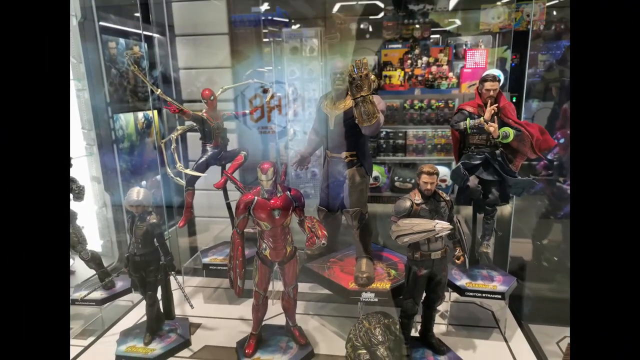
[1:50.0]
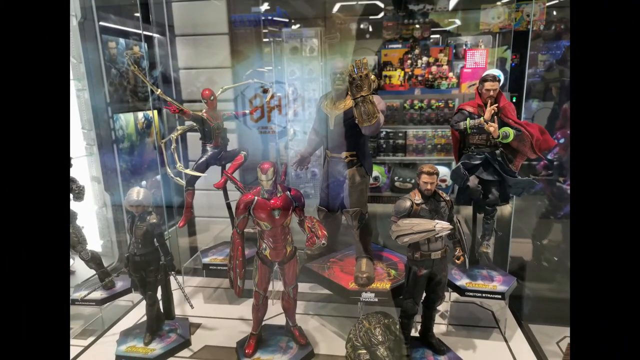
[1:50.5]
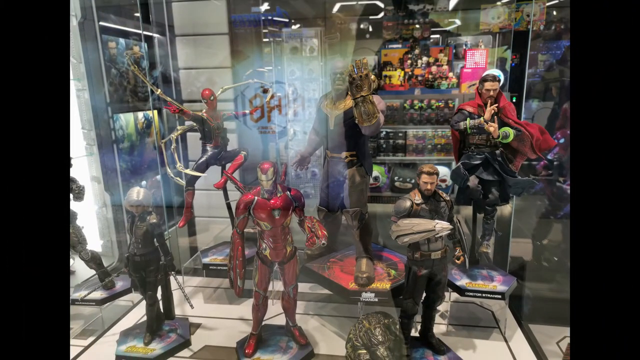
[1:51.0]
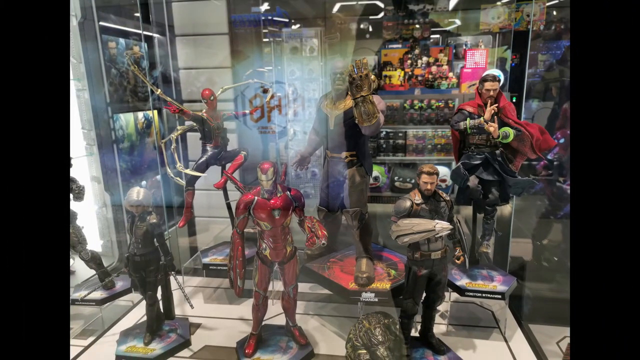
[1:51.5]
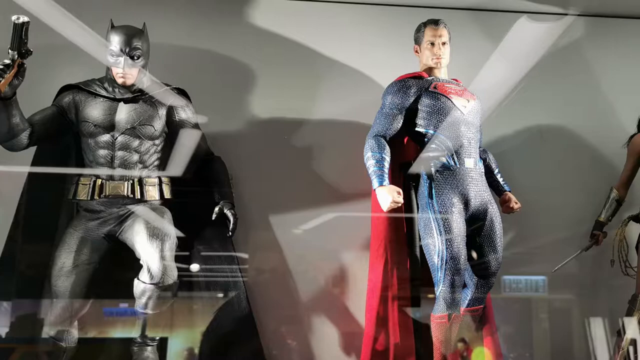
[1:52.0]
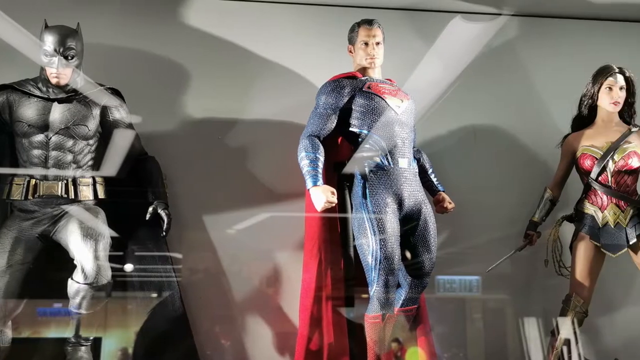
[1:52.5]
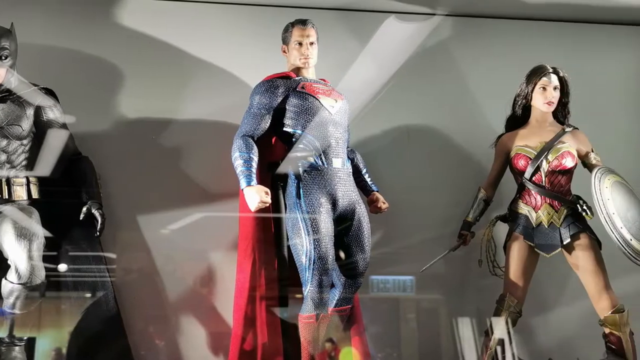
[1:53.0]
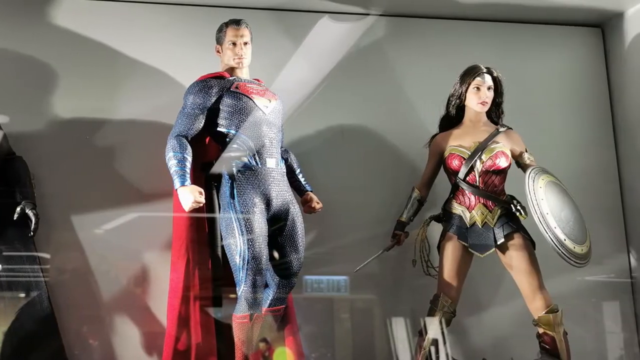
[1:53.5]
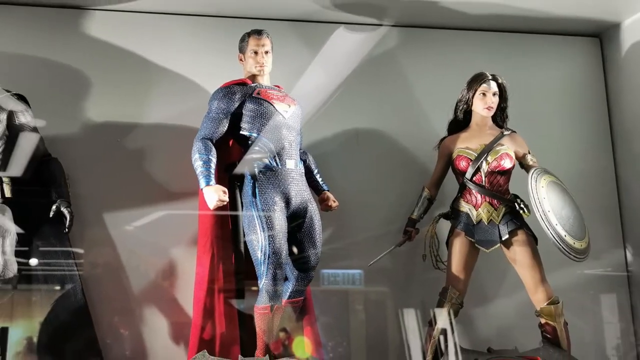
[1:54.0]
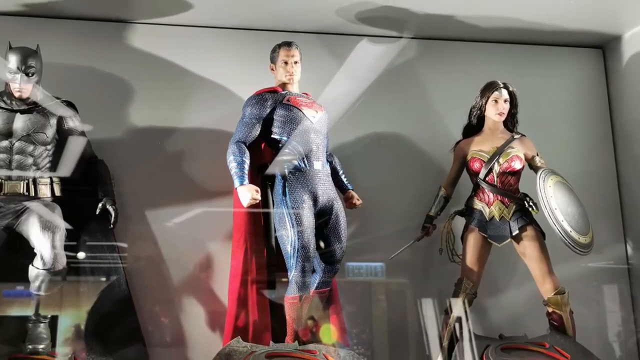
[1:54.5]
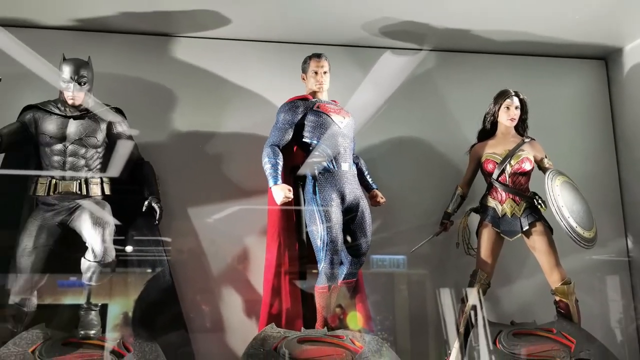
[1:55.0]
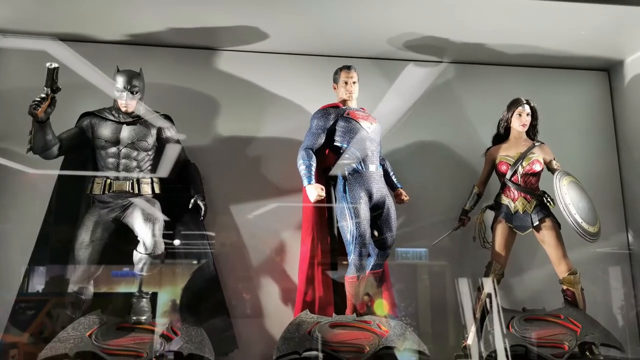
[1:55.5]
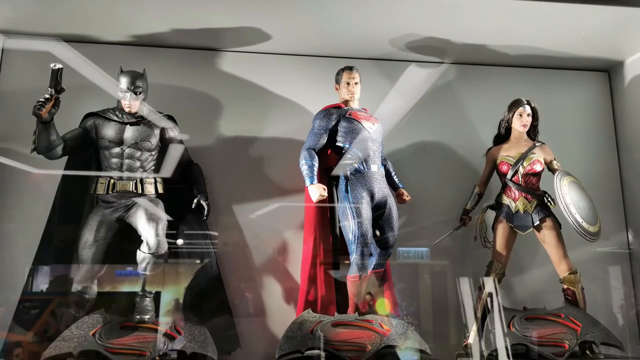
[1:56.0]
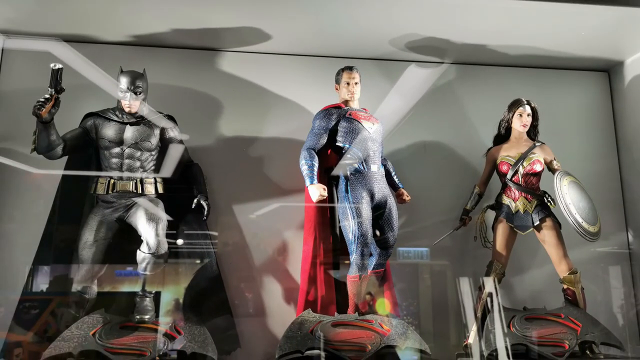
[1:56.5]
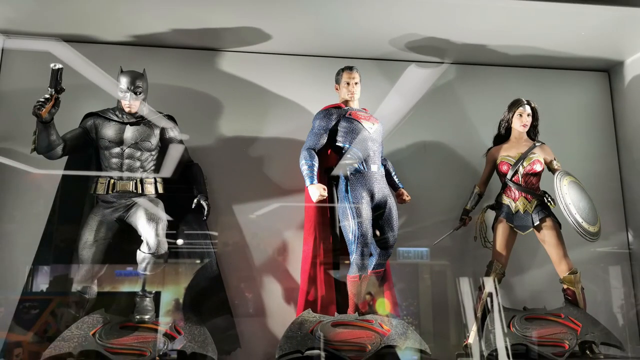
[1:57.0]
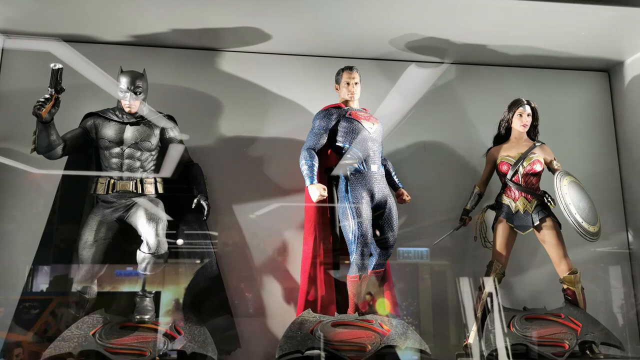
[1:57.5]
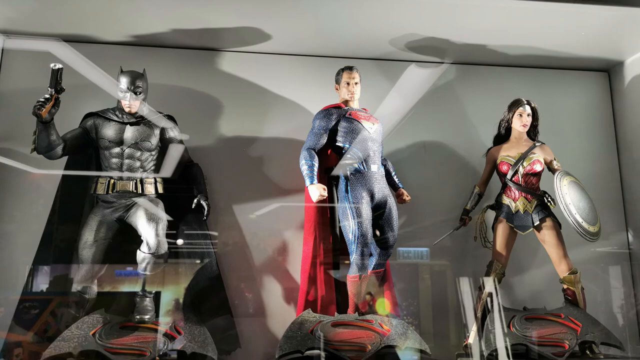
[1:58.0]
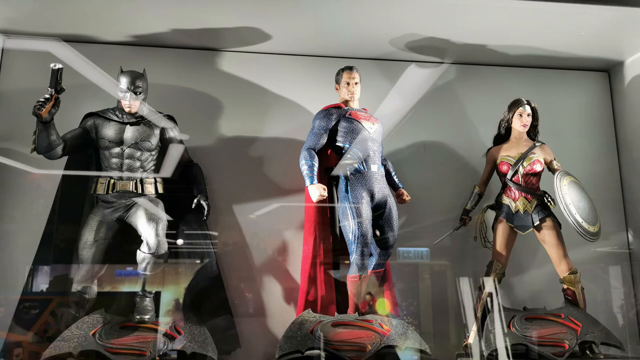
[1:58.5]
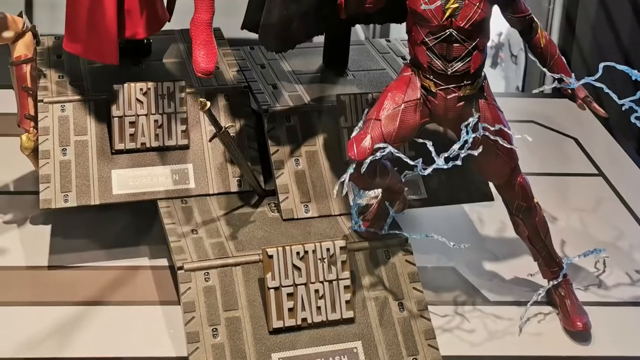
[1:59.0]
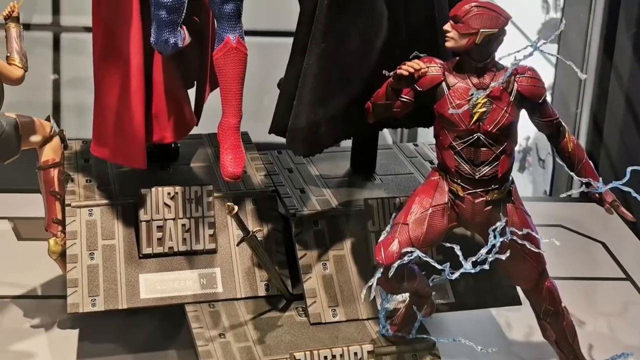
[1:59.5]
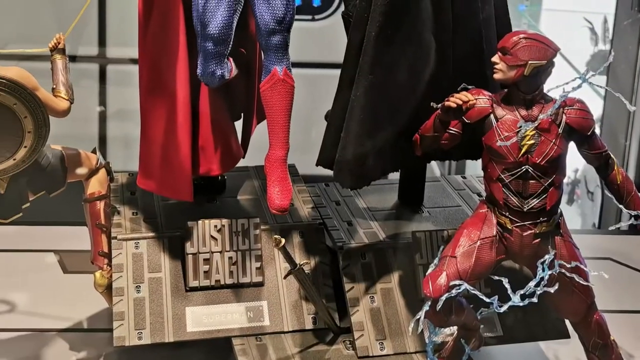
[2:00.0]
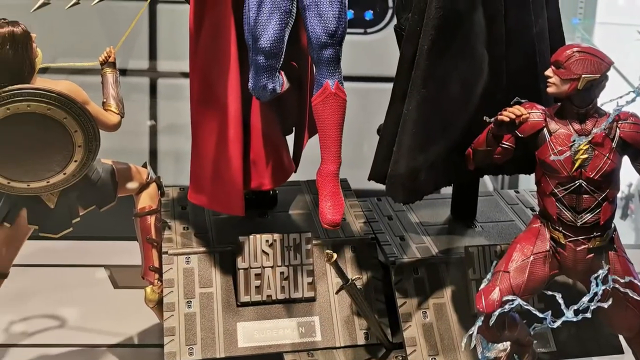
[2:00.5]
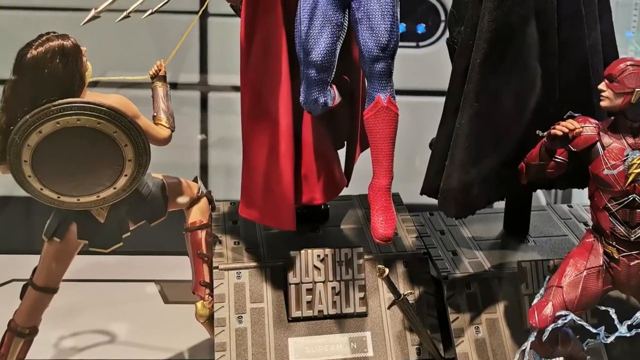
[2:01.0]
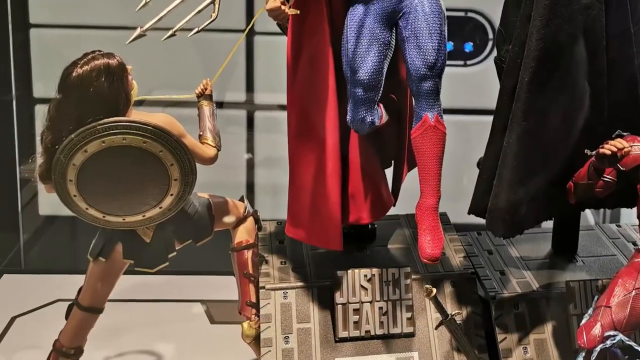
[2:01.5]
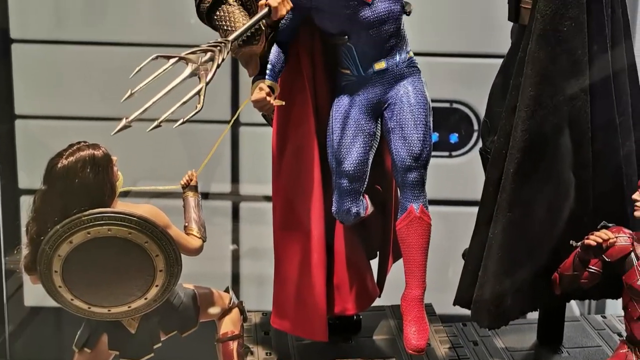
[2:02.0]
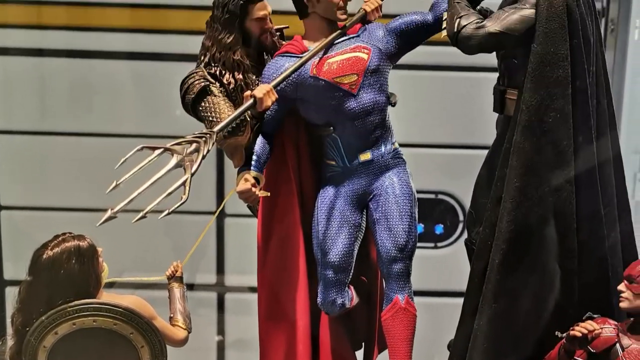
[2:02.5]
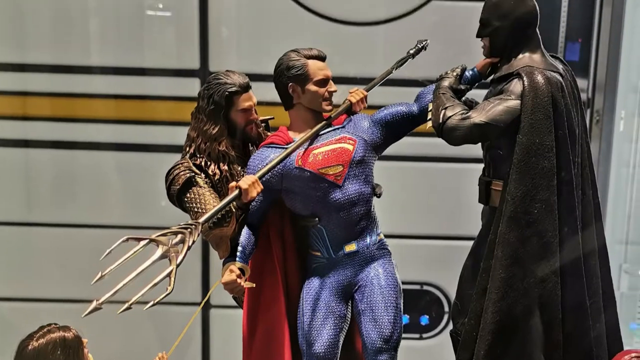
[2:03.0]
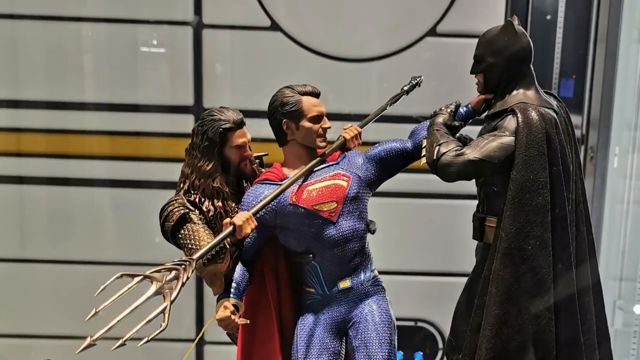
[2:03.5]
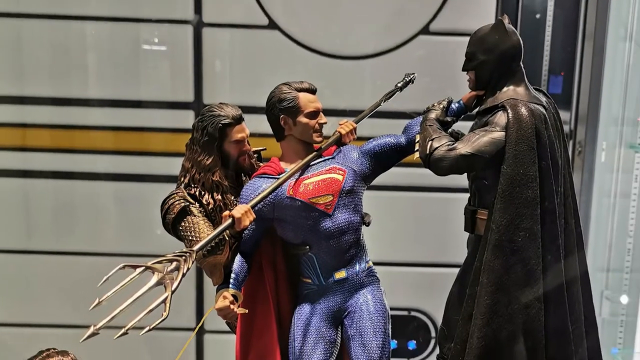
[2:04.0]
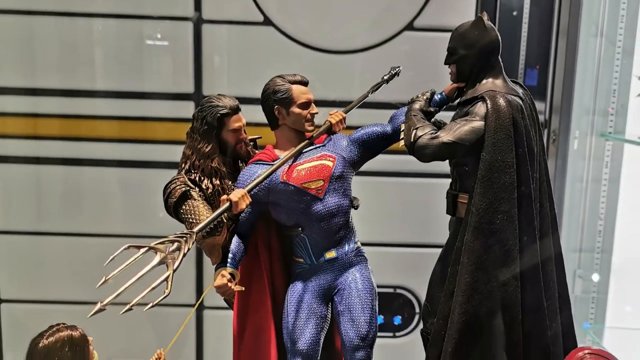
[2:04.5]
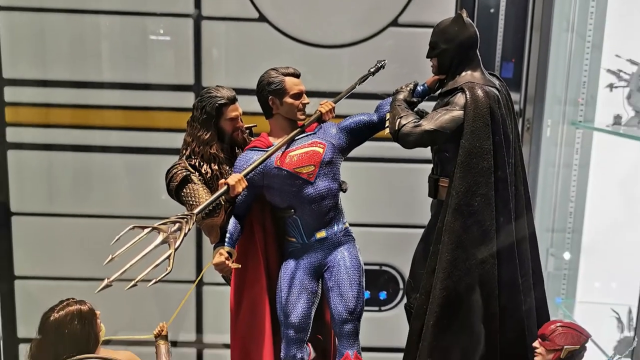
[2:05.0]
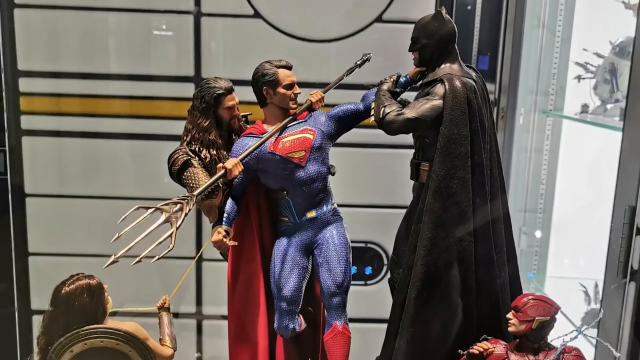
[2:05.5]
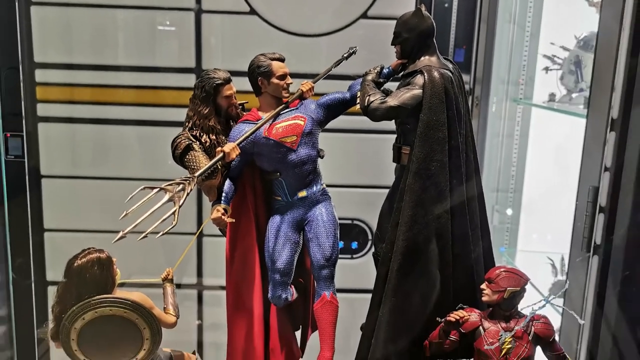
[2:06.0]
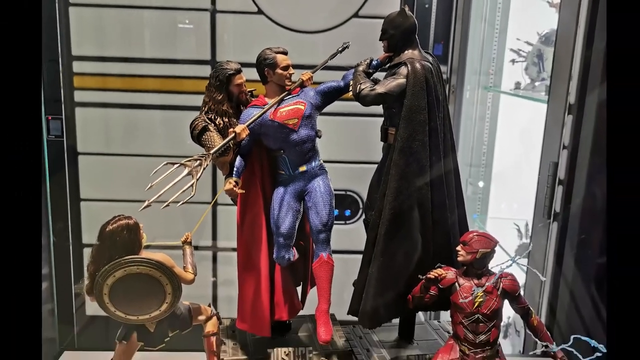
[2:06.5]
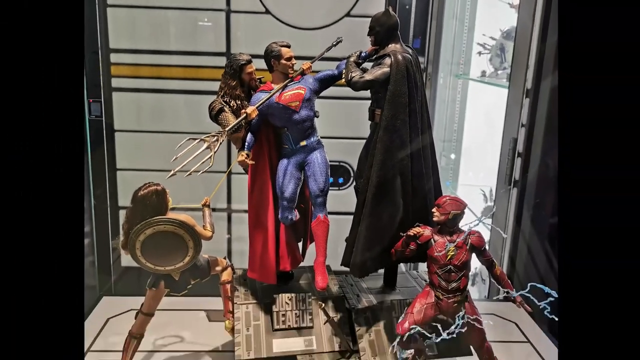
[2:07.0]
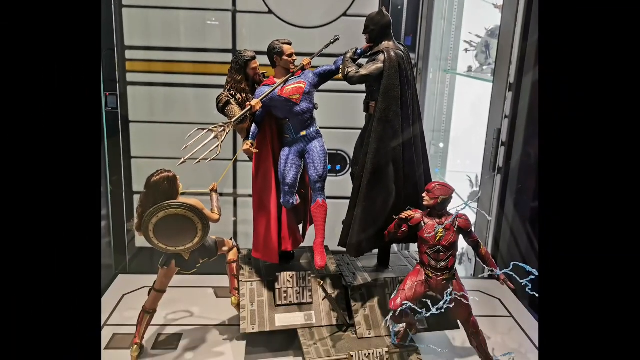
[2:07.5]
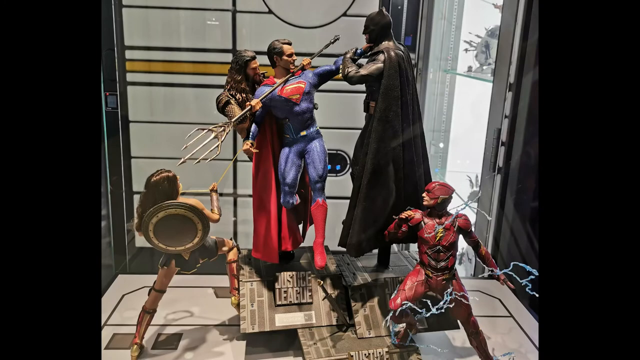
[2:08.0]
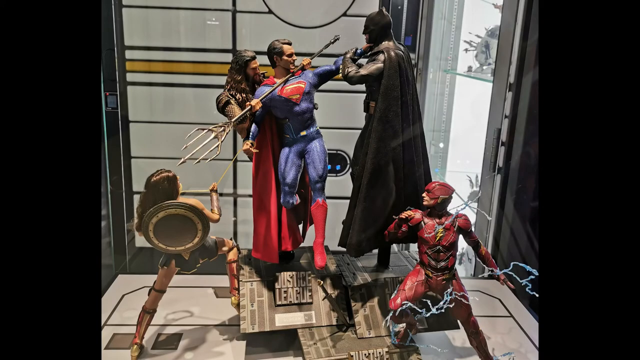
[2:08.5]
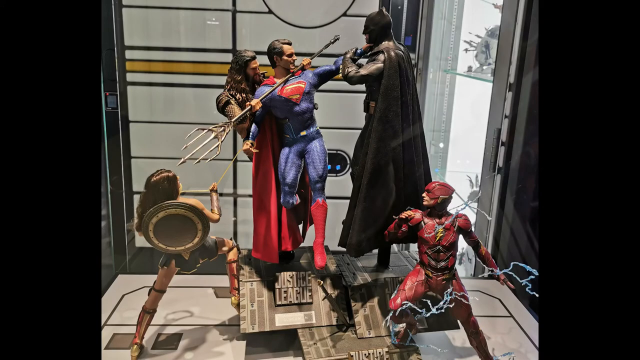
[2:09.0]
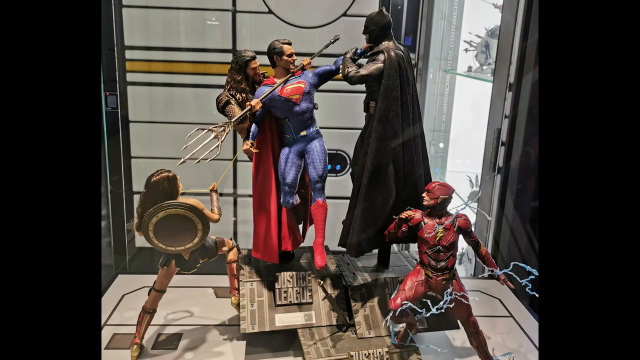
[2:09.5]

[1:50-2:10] After the Avengers Infinity War figures, a photo shows DC characters: Batman, Superman and Wonder Woman, seemingly from one of the DC movies starring Ben Affleck and Henry Cavill, as what seem to be figures inside a display case, shown from left to right. The video then pans to another display case photo with Justice League characters from the Justice League movie: Superman, Aquaman, Batman, Flash and Wonder Woman, in a diorama of them fighting, taken from the scene in the movie where they all fight Superman. The video pans across each figure to show them in more detail and up close.